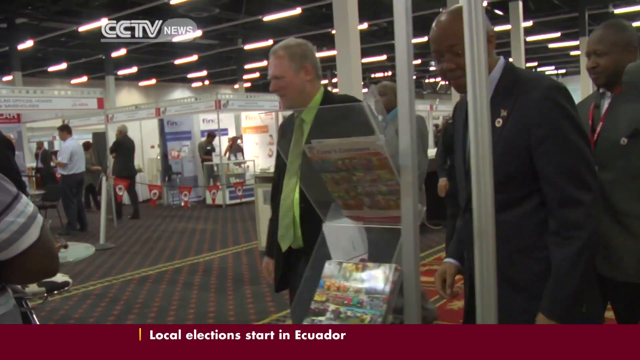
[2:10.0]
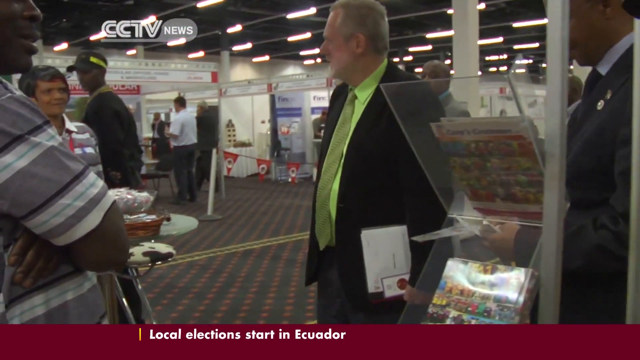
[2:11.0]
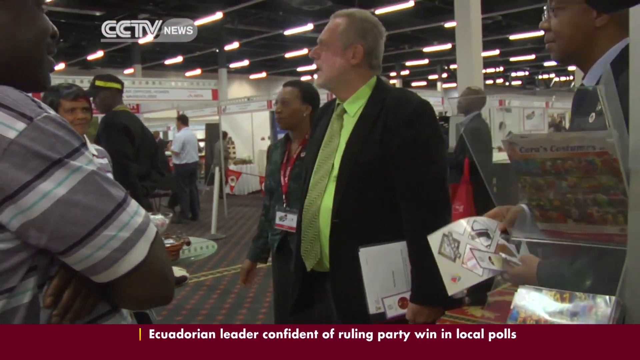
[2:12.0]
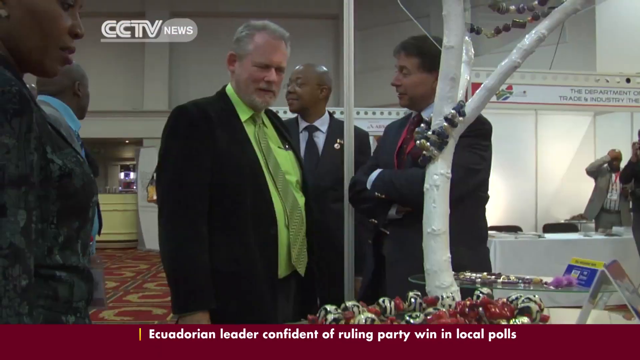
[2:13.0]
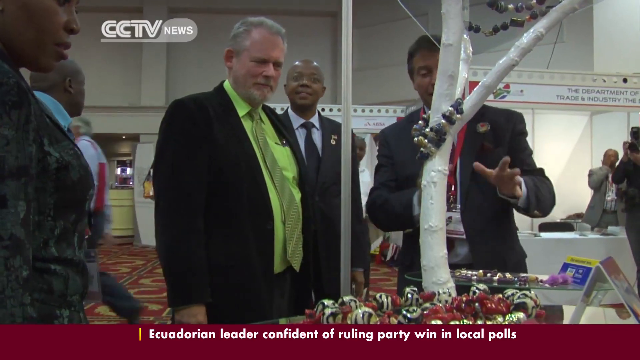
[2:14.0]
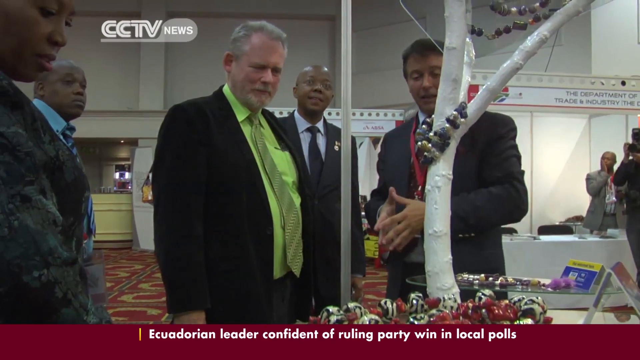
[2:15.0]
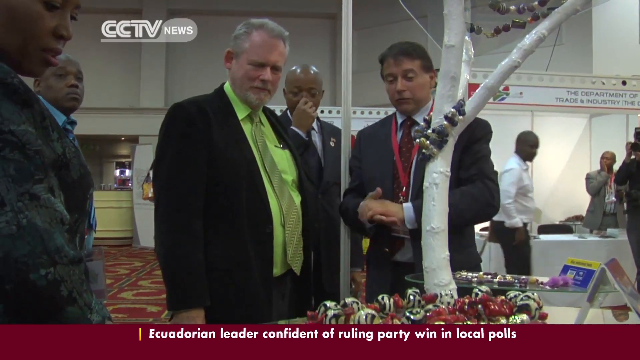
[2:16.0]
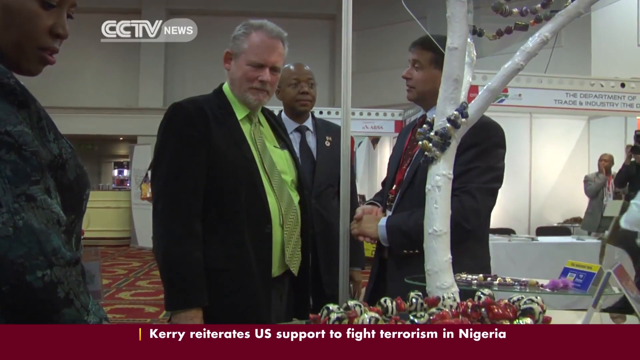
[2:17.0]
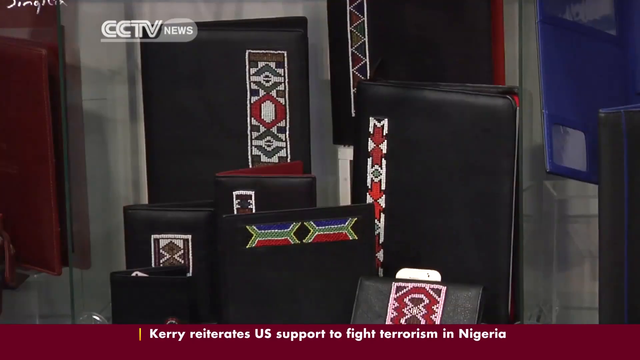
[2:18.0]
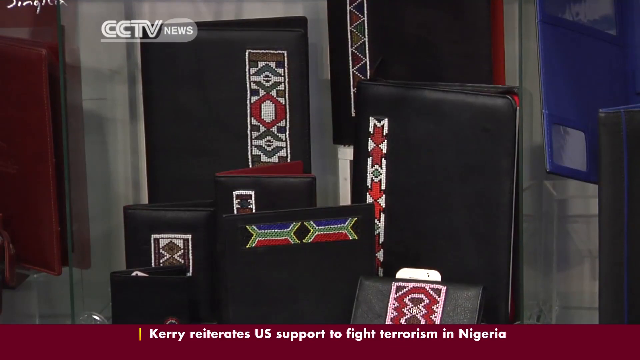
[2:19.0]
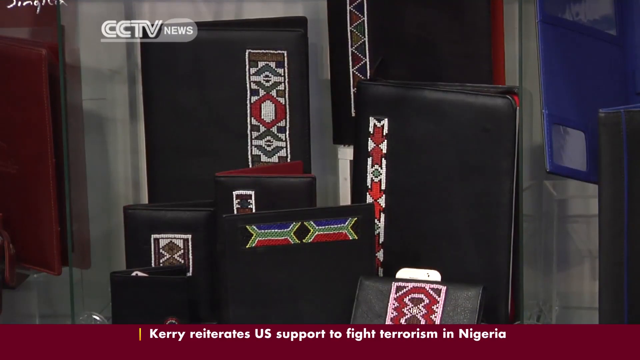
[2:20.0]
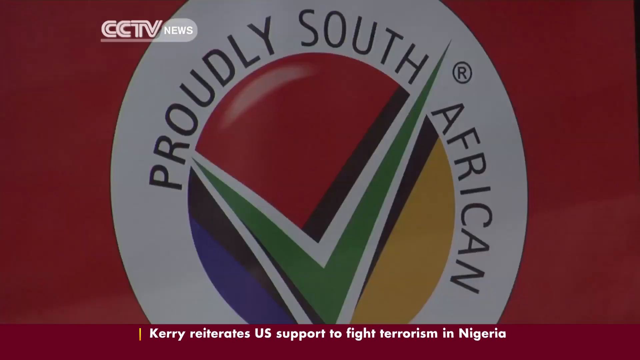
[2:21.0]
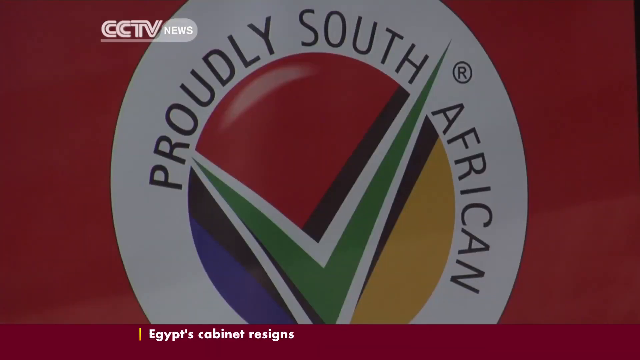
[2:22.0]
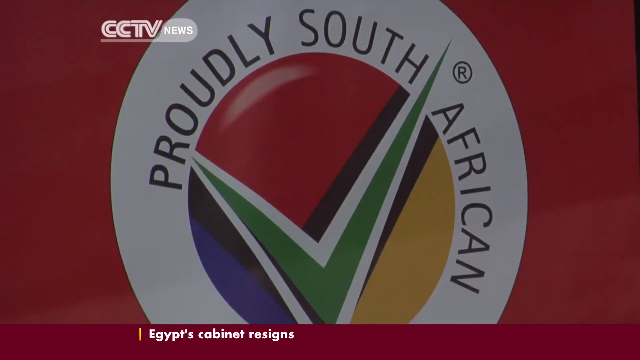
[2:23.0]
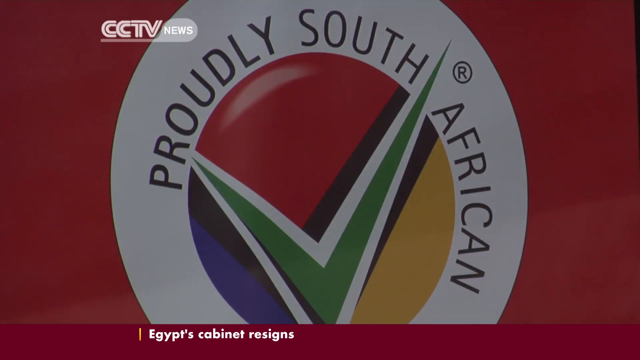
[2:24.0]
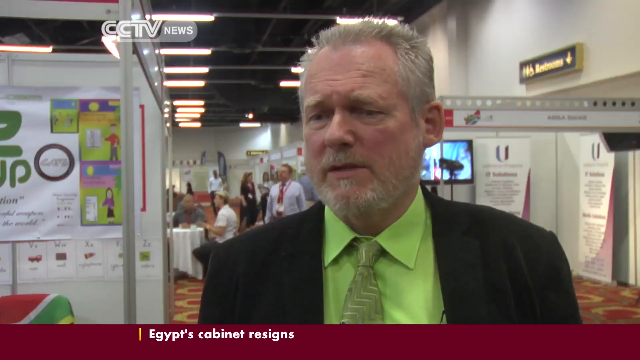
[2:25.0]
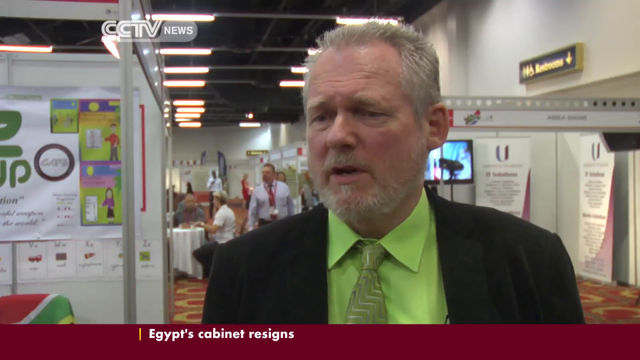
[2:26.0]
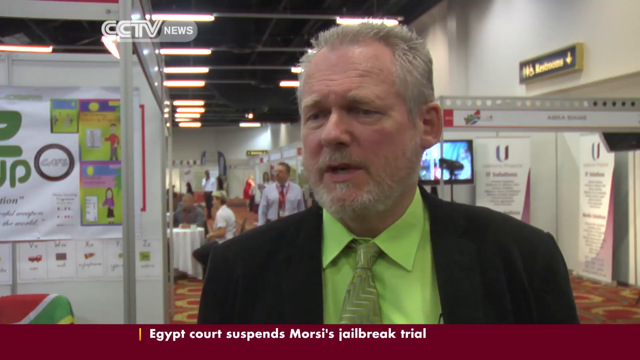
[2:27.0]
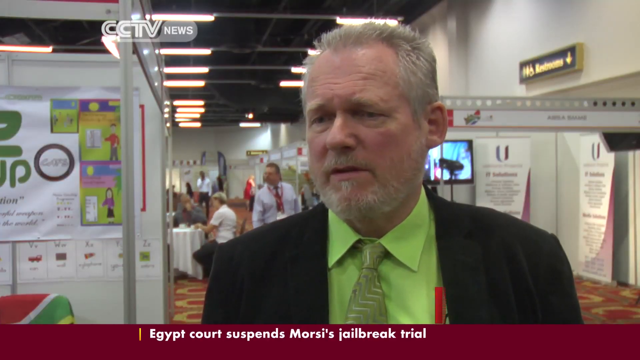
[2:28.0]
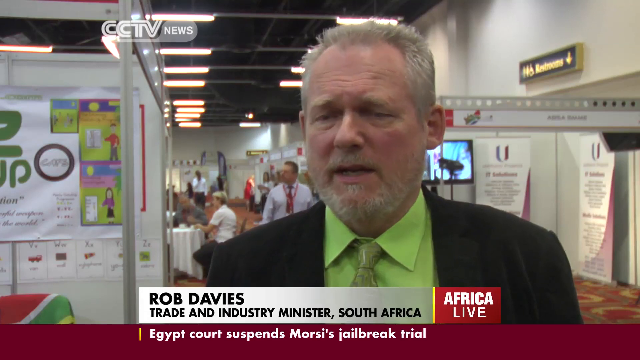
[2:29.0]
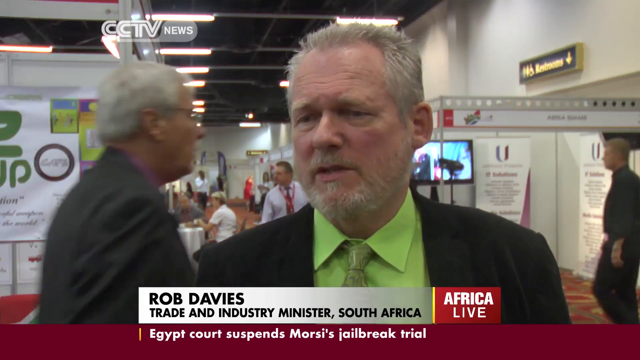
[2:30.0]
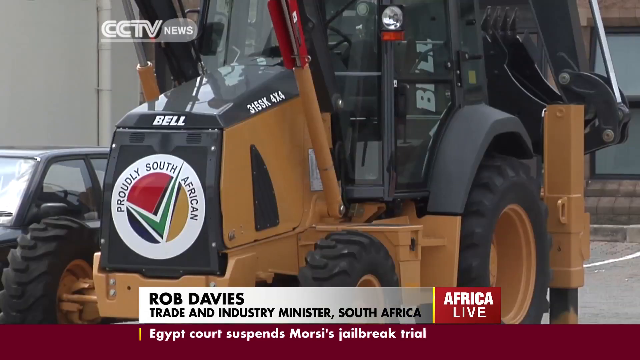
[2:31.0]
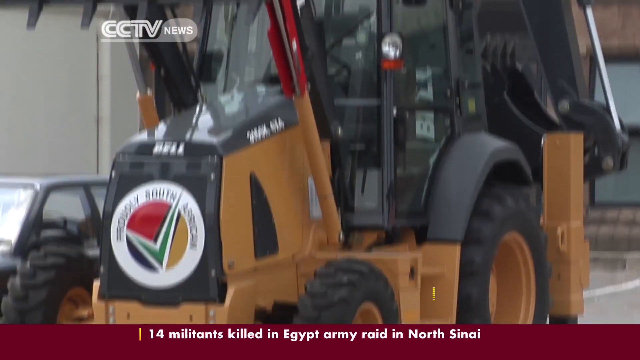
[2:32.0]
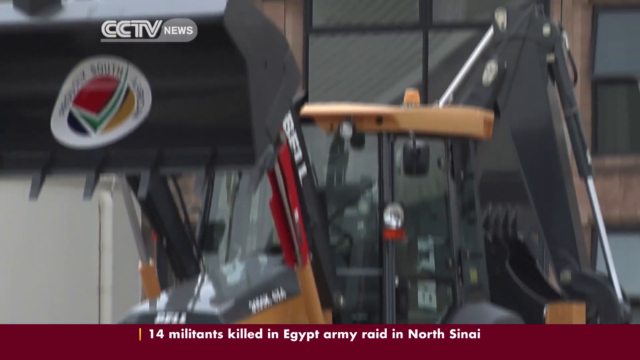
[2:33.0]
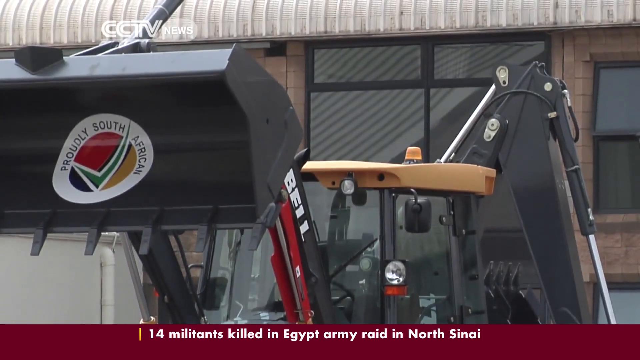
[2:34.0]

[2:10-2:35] Important-looking men walk through the convention where vendors sell their goods, looking at other people's products. One man appears to be selling purses and wallets with designs on them. The event apparently takes place somewhere in Africa. News runs along the bottom of the screen in white words, and text reads "Proudly South African." A Caucasian man in a black suit, green shirt and green tie speaks; he is Rob Davies, D-A-V-I-E-S, the trade and industry minister of South Africa. A "proudly South African" logo is shown on a little tractor machine.